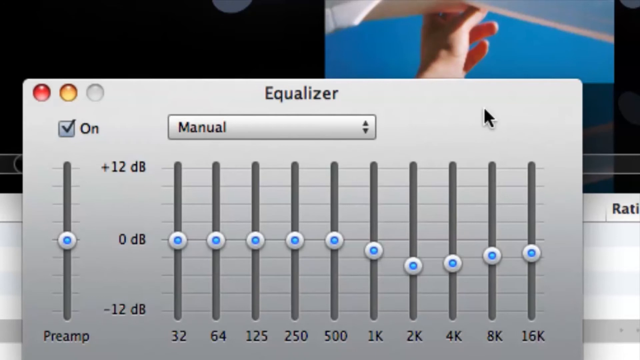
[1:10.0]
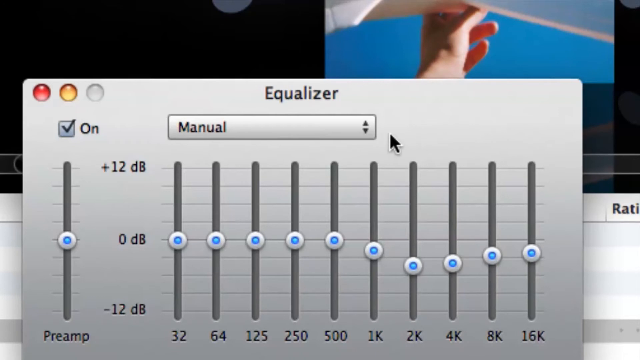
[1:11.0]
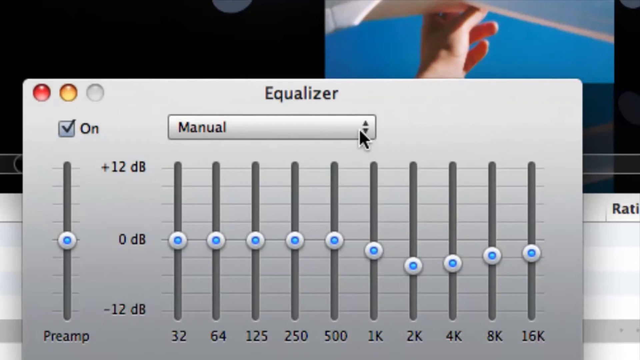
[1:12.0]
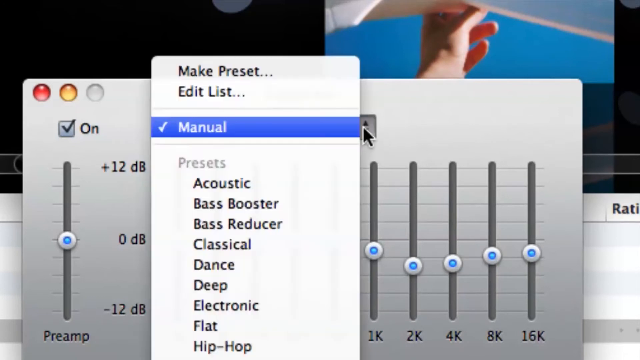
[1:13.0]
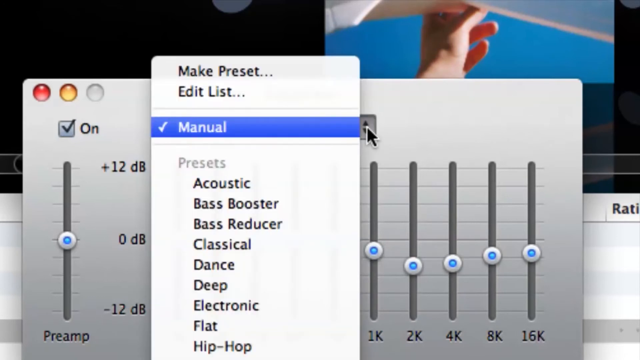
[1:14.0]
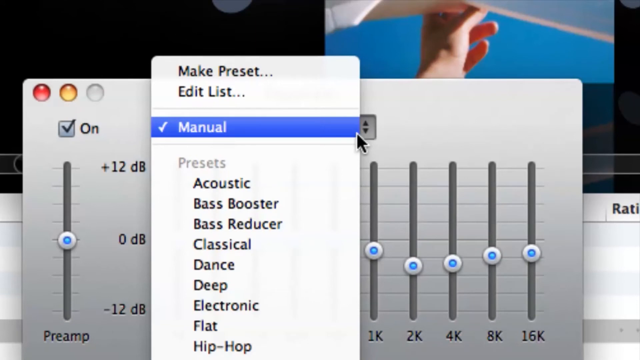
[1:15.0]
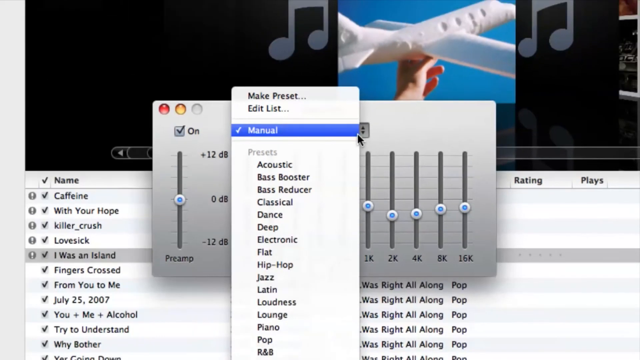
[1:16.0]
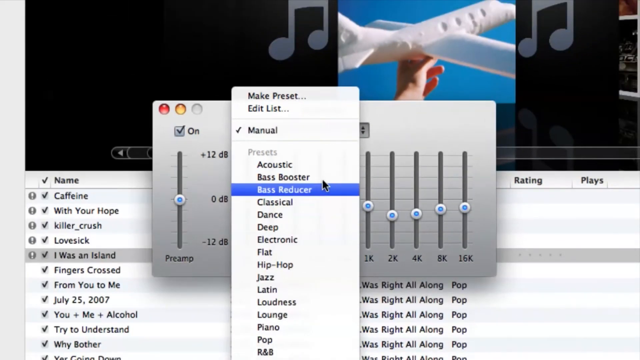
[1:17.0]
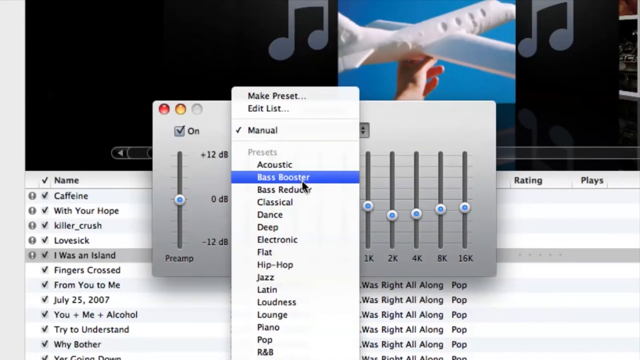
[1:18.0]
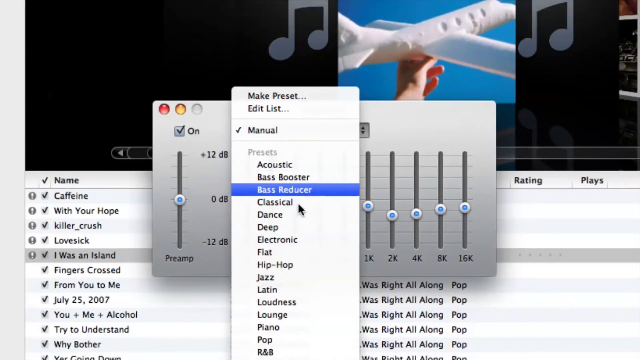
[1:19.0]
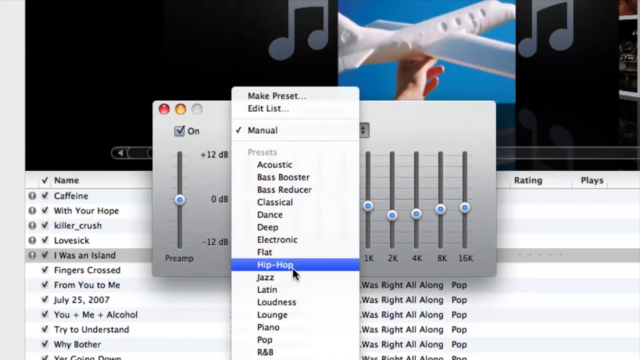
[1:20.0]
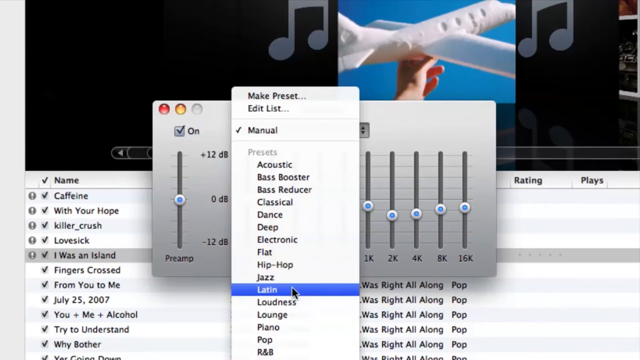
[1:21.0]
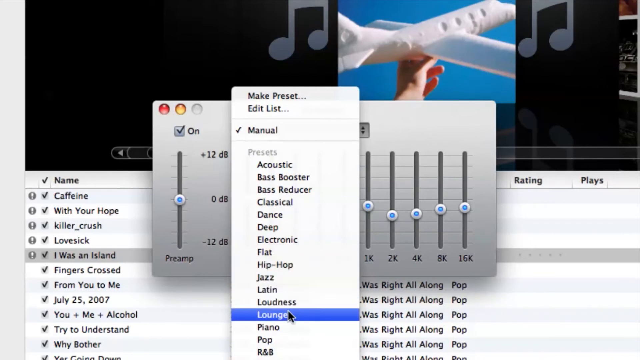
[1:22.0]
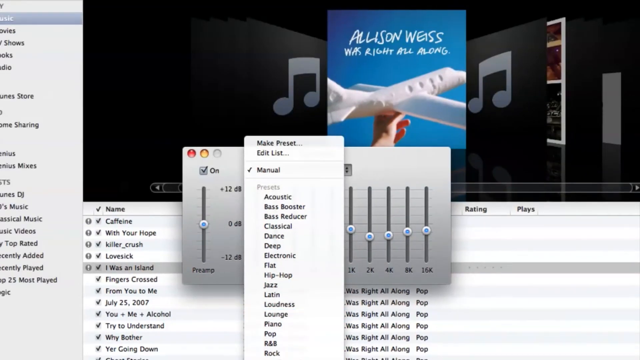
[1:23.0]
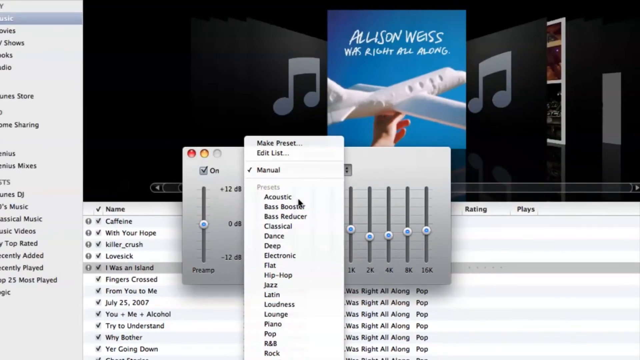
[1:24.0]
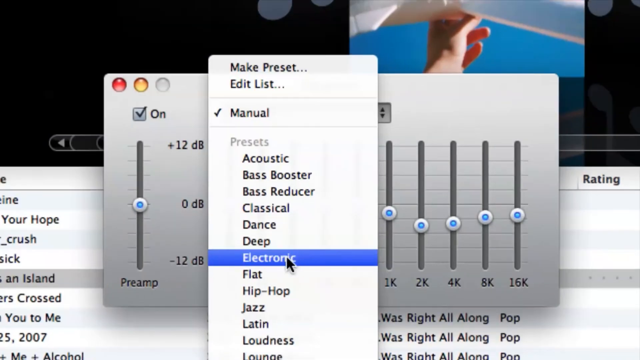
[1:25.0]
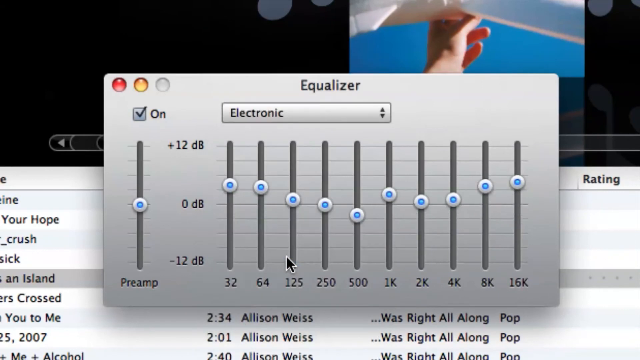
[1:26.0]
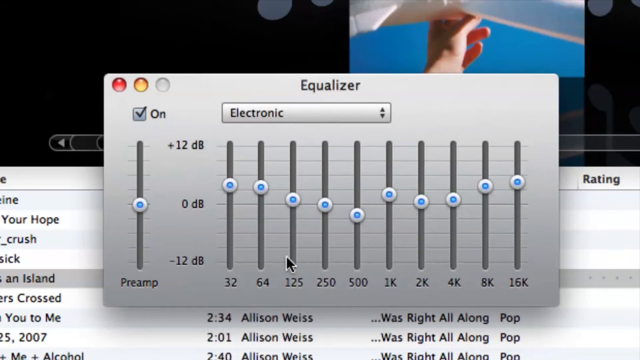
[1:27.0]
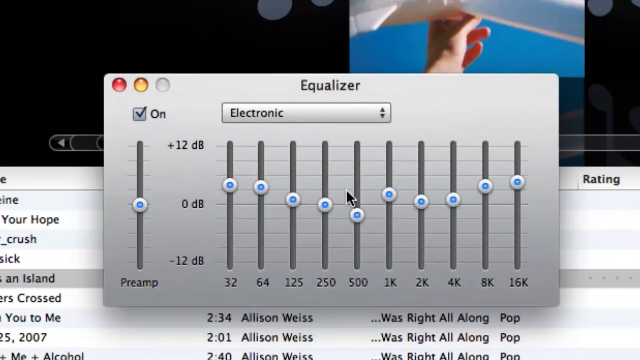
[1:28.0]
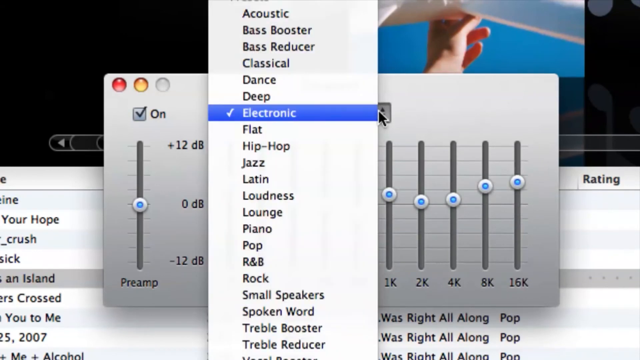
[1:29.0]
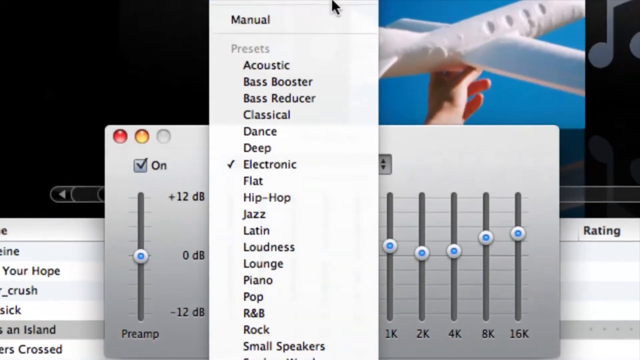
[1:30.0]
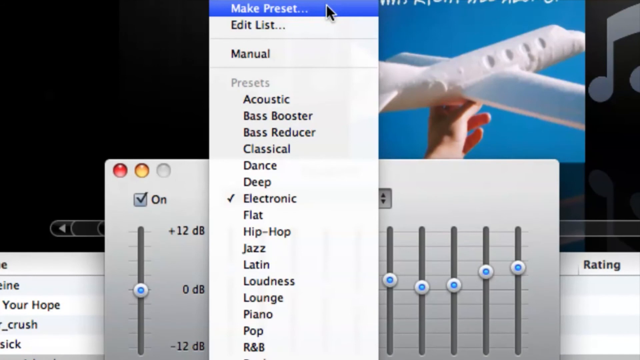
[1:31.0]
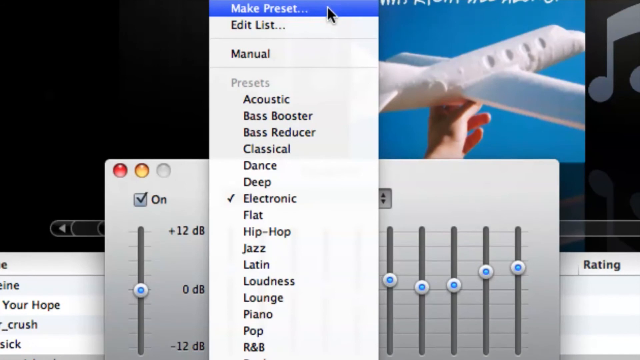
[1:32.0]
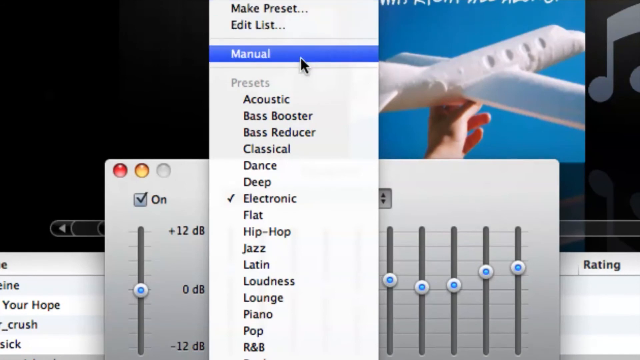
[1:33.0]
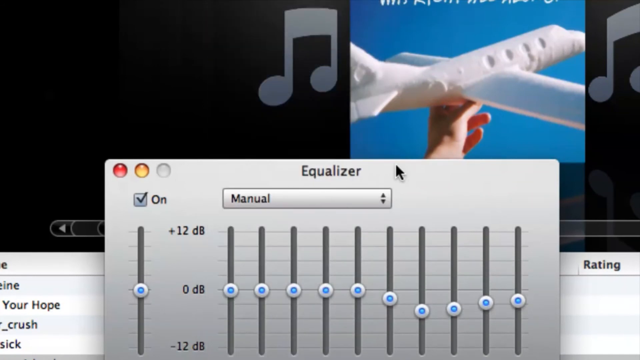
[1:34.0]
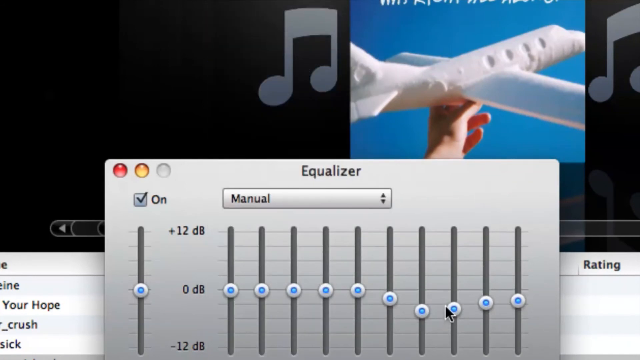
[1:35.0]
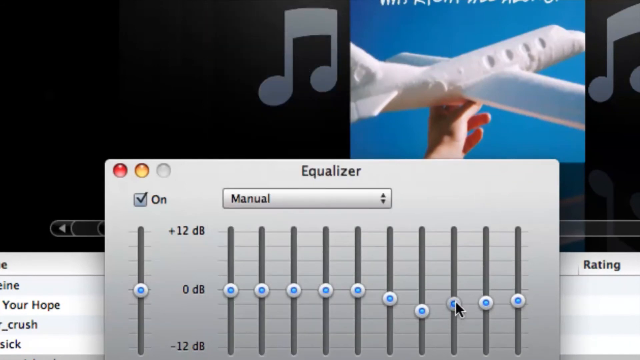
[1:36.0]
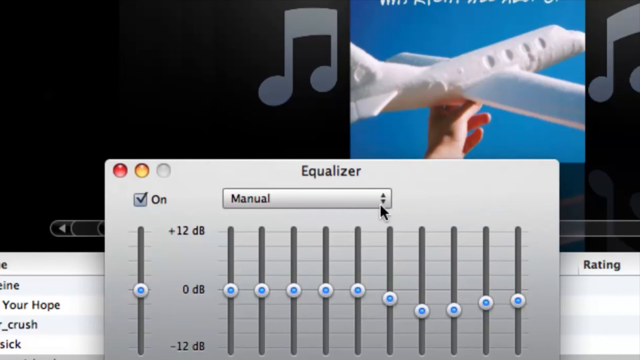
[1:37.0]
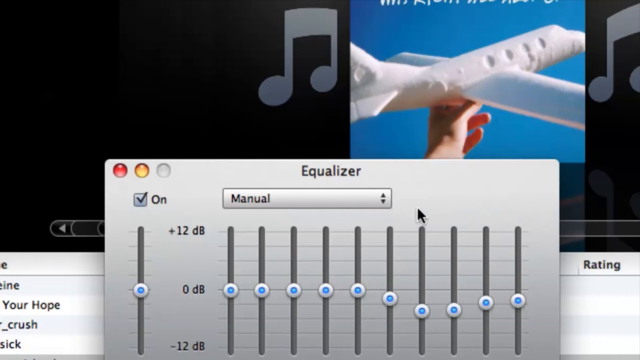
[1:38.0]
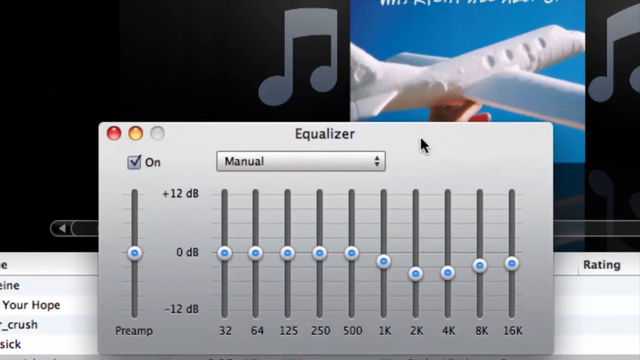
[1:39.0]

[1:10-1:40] The cursor hovers over where it says "manual", and the preset list appears to have been clicked open. "Manual" is selected in blue, with various other presets below it, including acoustic, bass booster, bass reducer, classical, dance, deep, electronic, flip, hip hop, jazz, Latin and more. The cursor scrolls across the different options while the screen slowly zooms out. The cursor selects electronic, the menu snaps back into the window, and all of the bars redistribute to a different configuration; the changes made earlier are lost. The cursor then opens the preset equalizer menu and selects manual again, and the bars click back to their previous altered positions around the 1K and 2K sections.